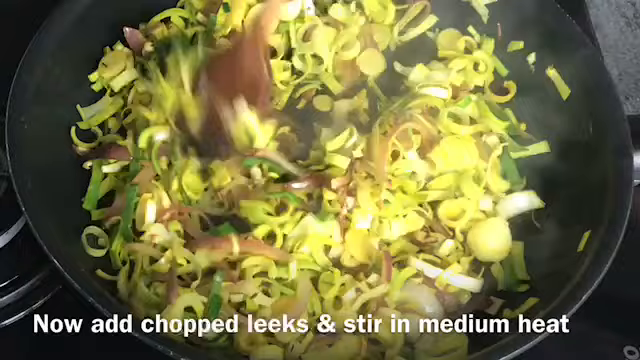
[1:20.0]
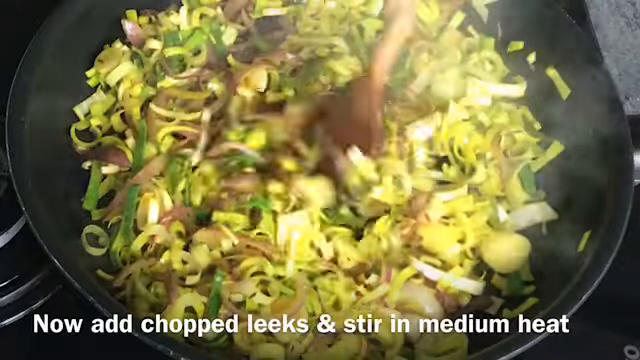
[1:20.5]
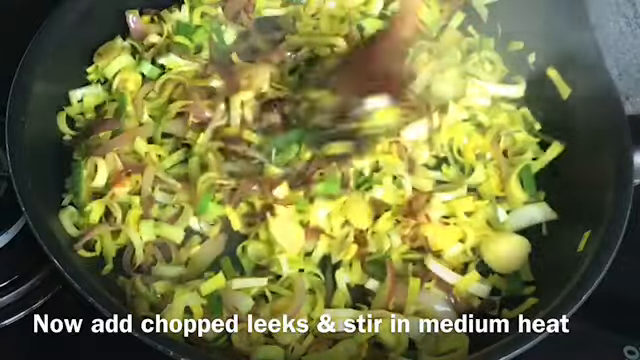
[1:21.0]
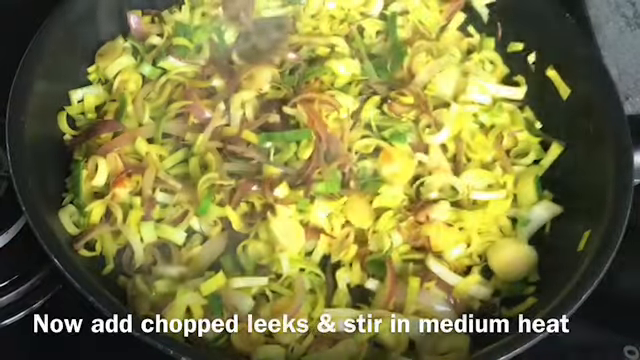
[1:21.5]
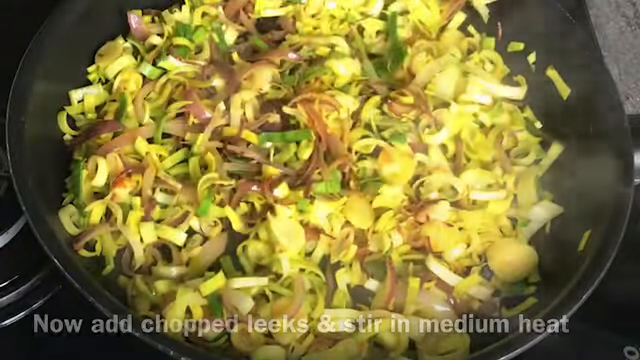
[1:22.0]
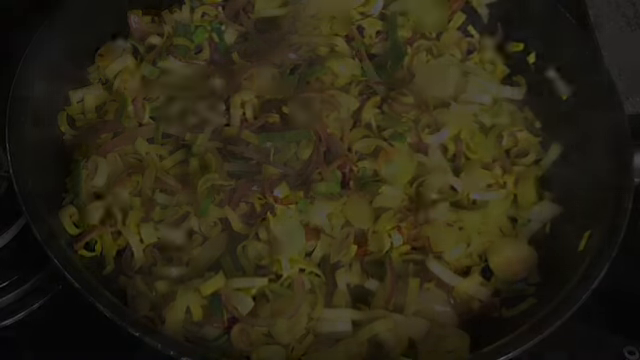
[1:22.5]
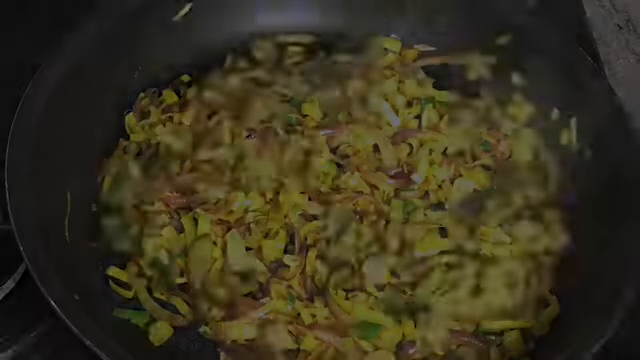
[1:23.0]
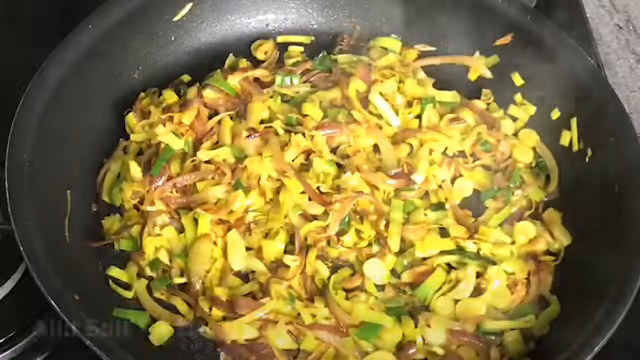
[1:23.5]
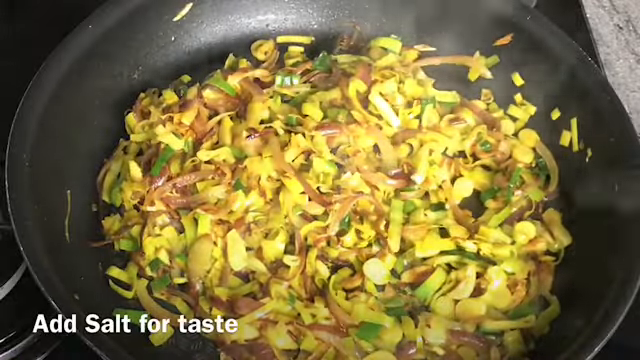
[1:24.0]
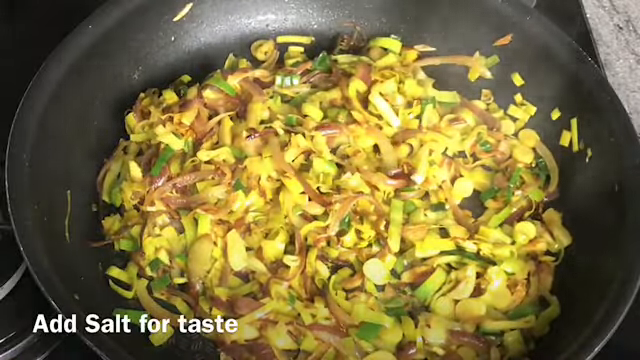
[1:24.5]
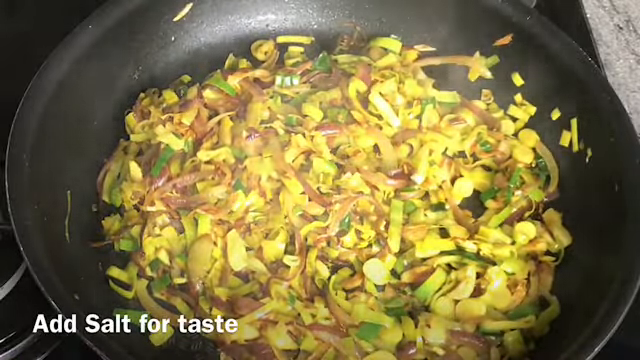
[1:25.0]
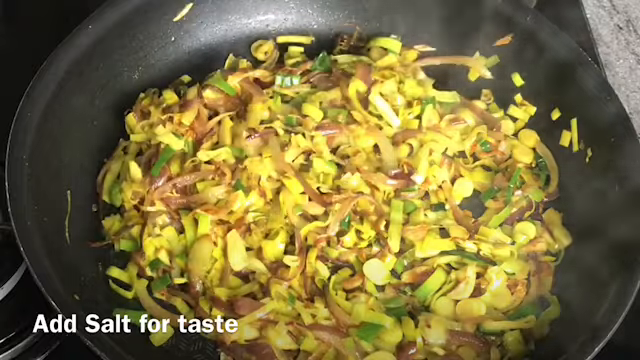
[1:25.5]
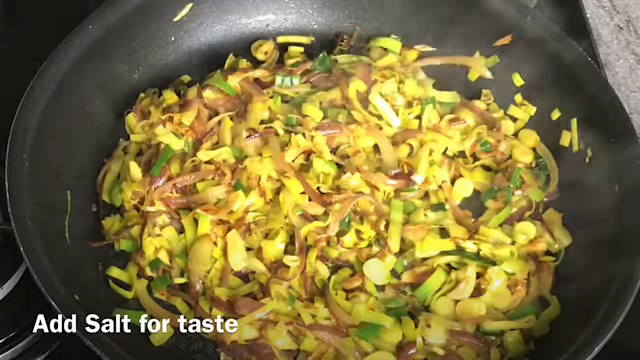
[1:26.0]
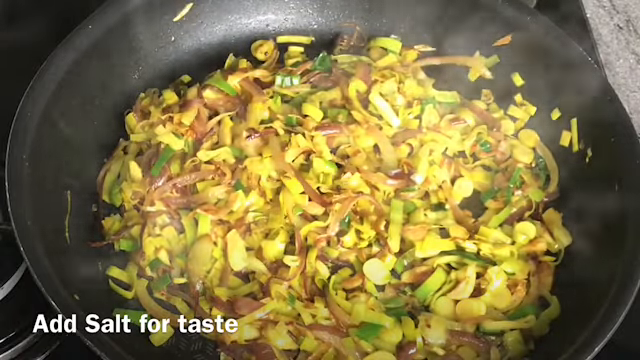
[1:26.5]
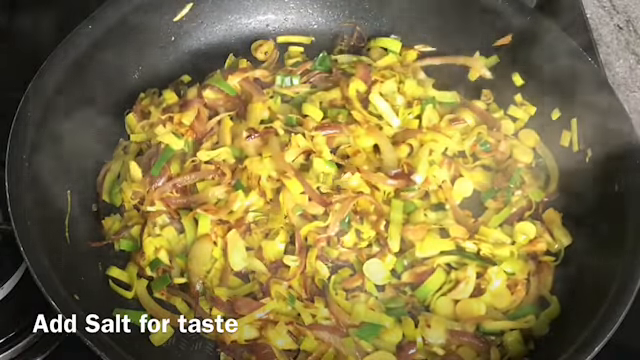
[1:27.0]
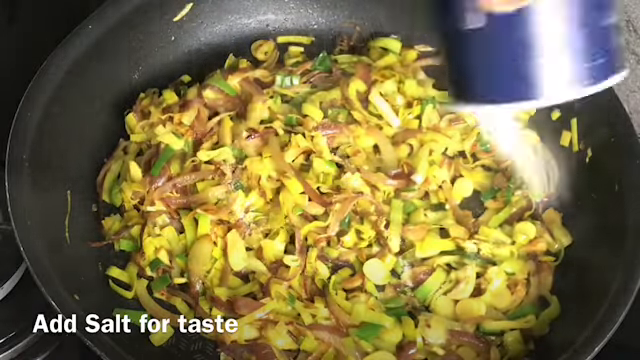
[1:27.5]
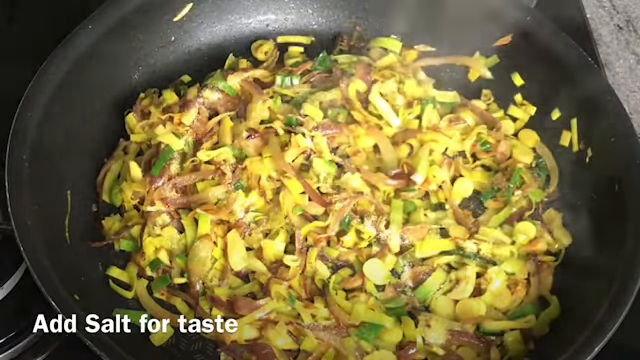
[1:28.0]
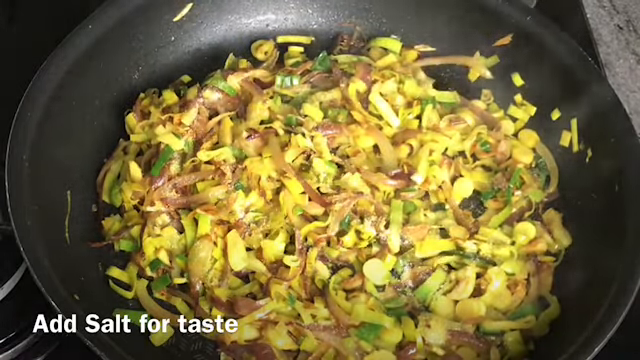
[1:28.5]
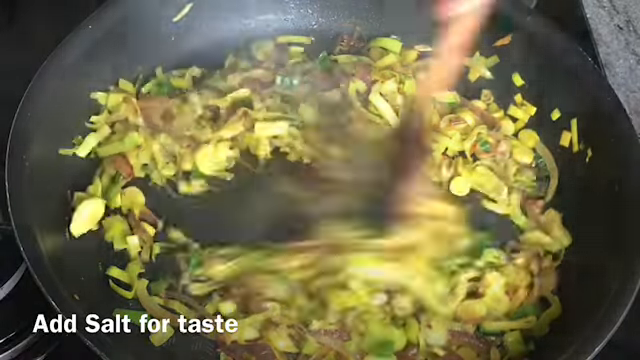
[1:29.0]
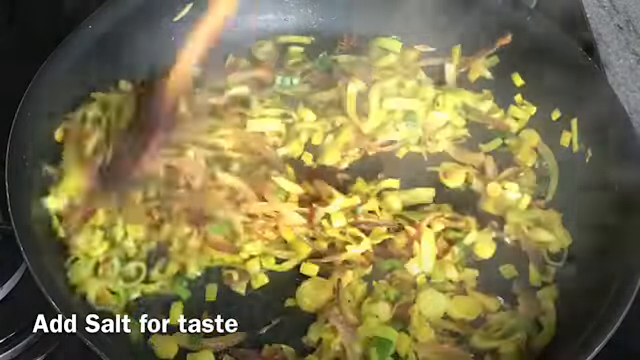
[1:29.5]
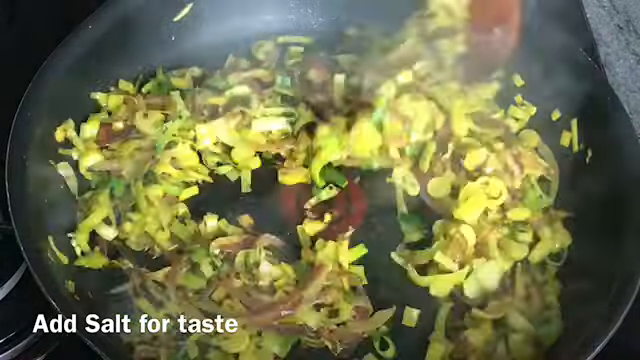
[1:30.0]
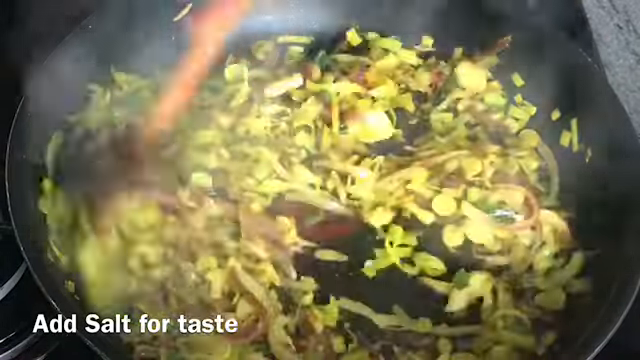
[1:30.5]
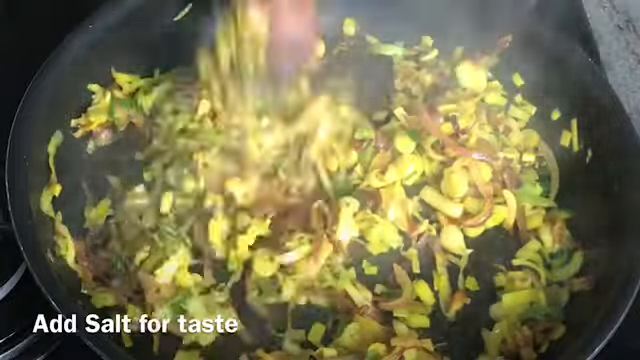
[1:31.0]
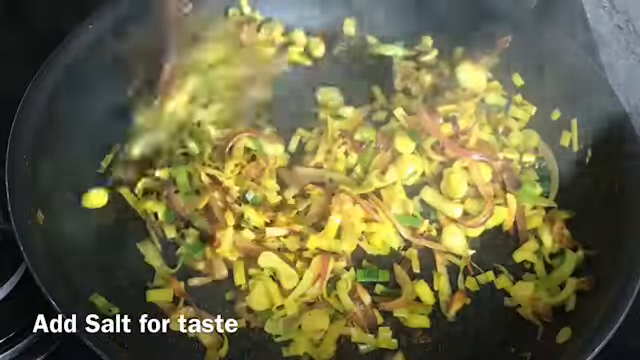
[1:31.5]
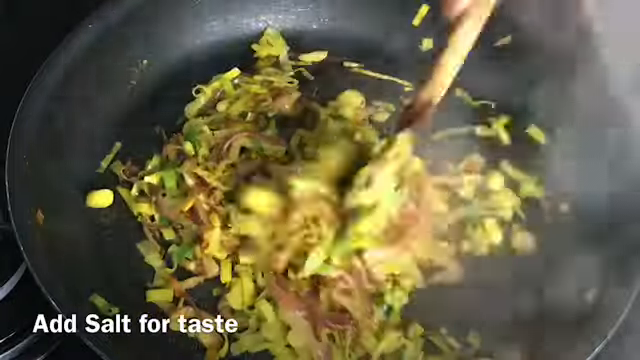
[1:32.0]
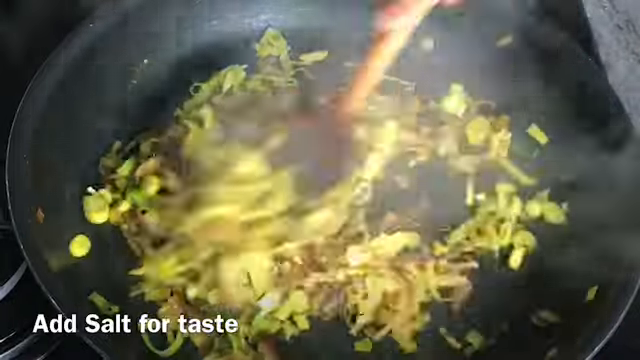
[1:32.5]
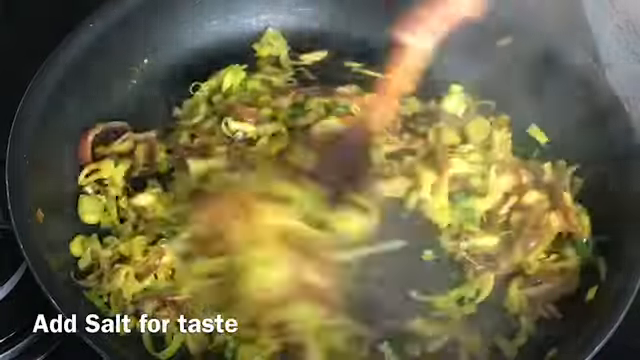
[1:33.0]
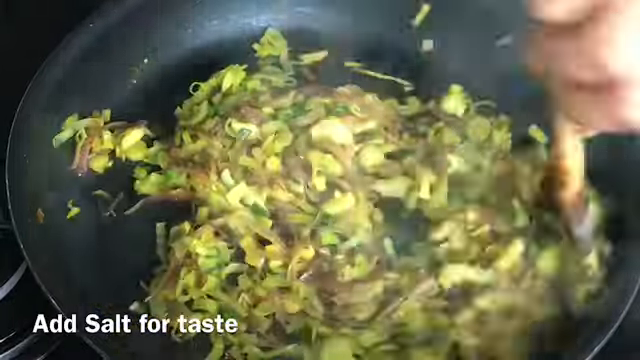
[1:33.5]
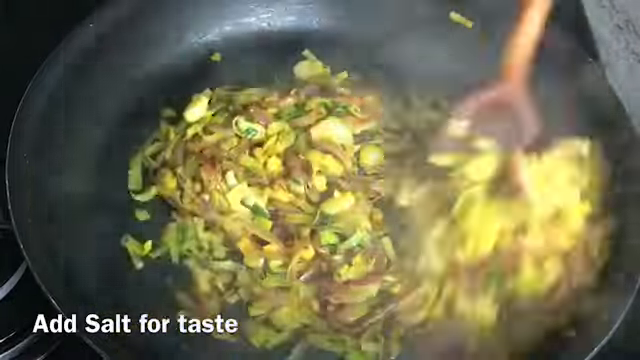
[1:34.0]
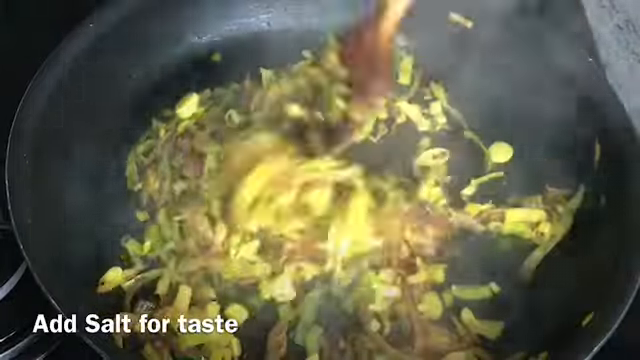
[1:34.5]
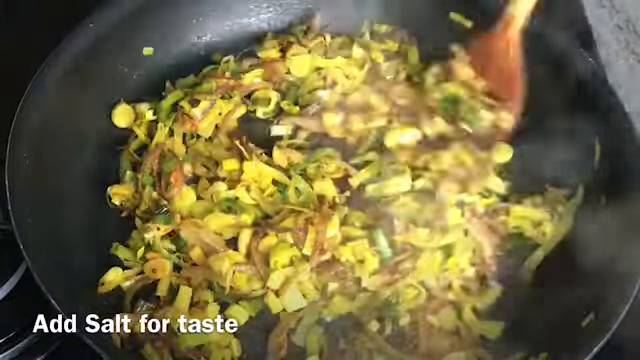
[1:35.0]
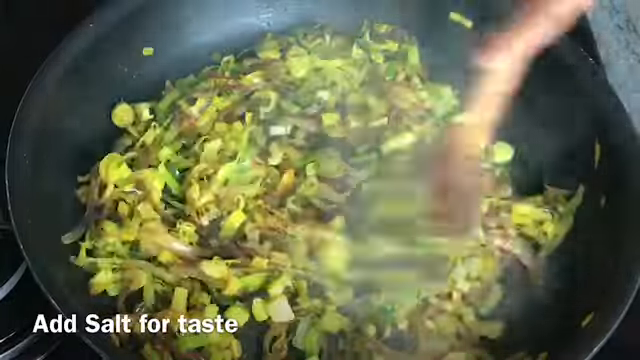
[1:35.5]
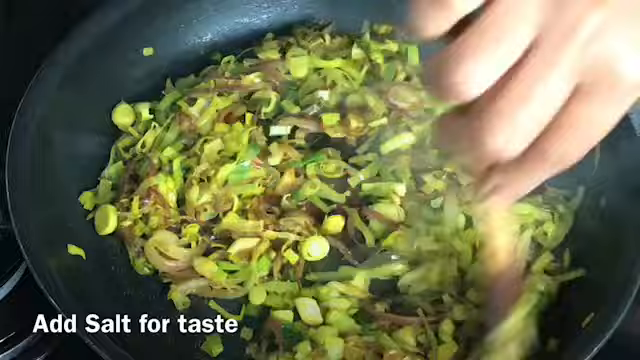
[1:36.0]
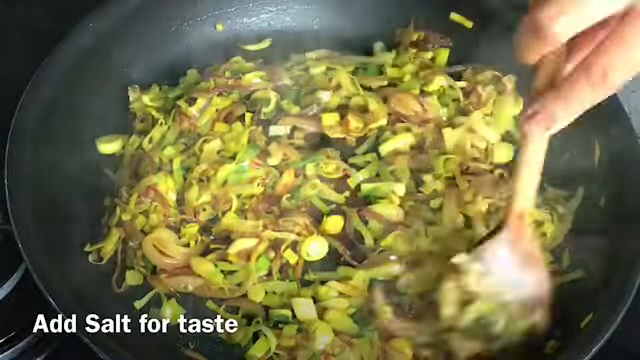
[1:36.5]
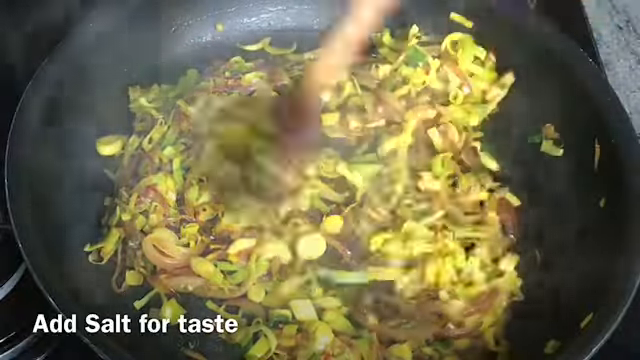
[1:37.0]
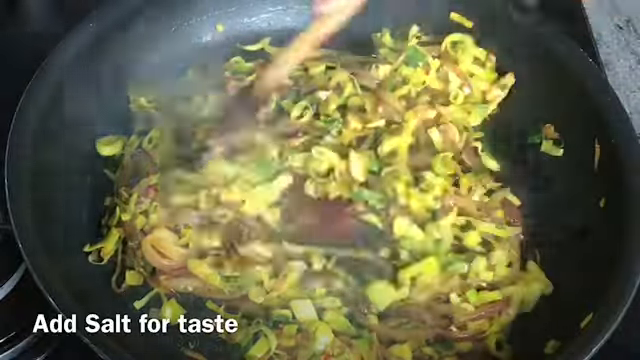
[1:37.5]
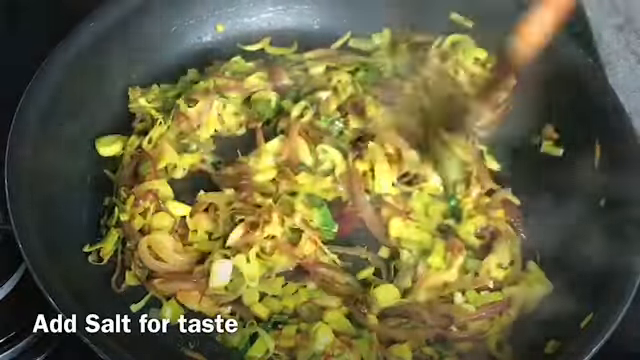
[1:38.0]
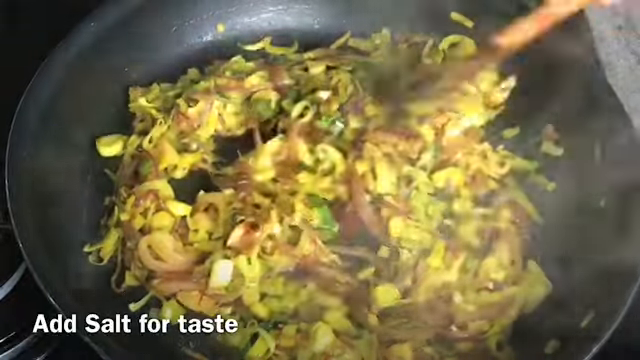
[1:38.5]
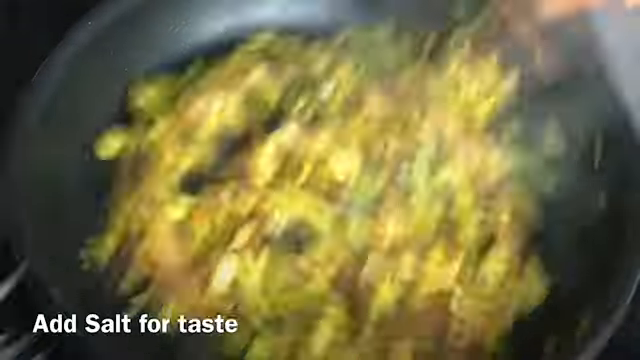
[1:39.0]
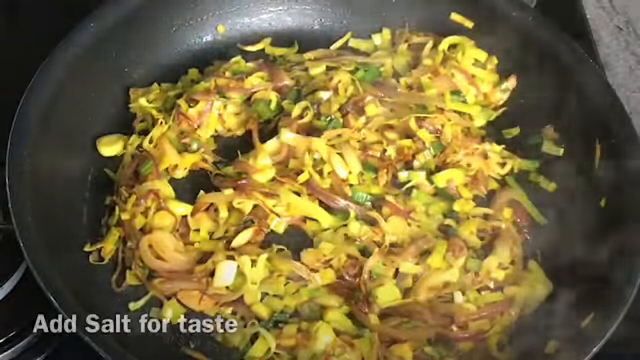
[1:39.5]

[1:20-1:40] Salt is added to taste: a pinch of plain white salt, a decent amount, is dropped in with the fingers and can be seen going in. The food looks cooked and softer, steam comes up from it, and it fills most of the black frying pan. It is stirred with the same wooden spoon, a little more quickly, with part of the hand holding the spoon visible. The onions are browned, still recognisable as red onions but more of a pink color with some caramelization, a little golden brown. The leeks have softened and remained almost the same color, maybe a little more yellow. The spoon sort of fluffs things around, stirring back and forth, side to side and round in a kind of figure-eight swirly pattern, followed by some tapping.